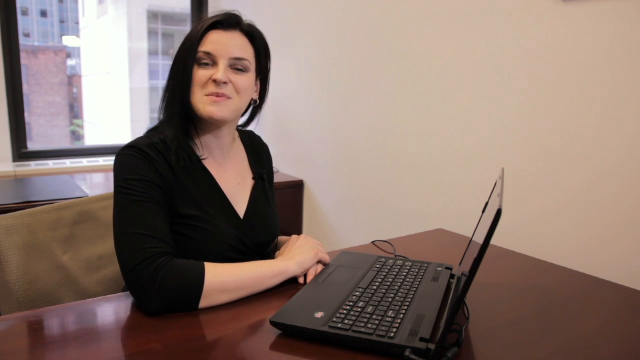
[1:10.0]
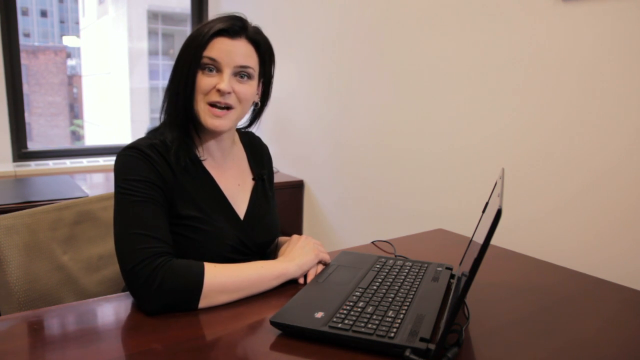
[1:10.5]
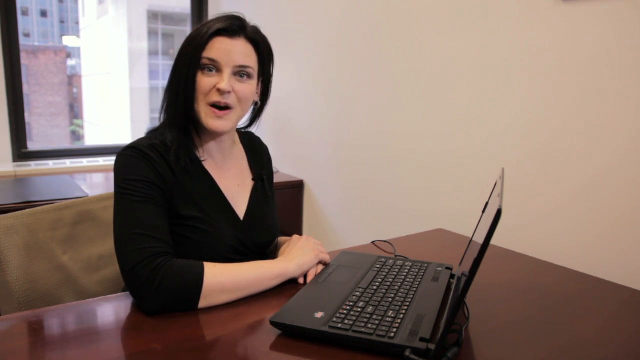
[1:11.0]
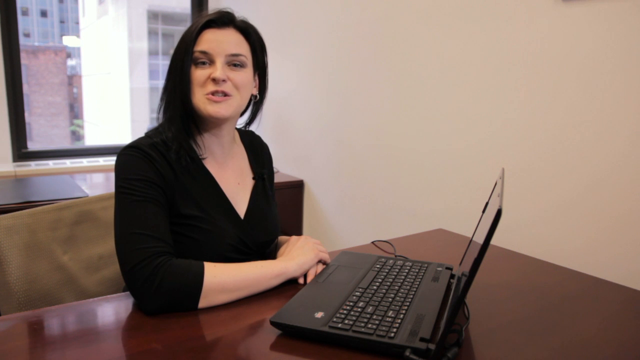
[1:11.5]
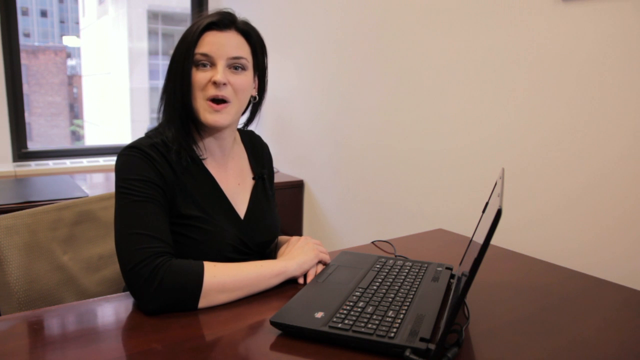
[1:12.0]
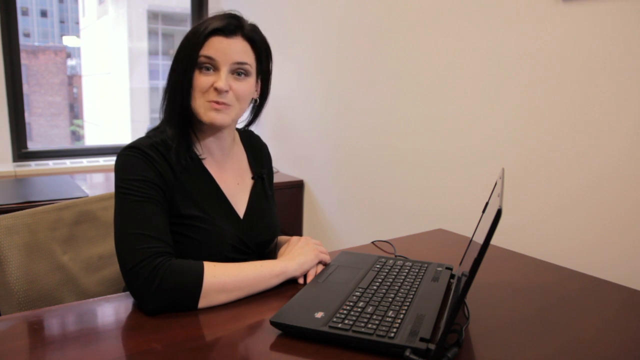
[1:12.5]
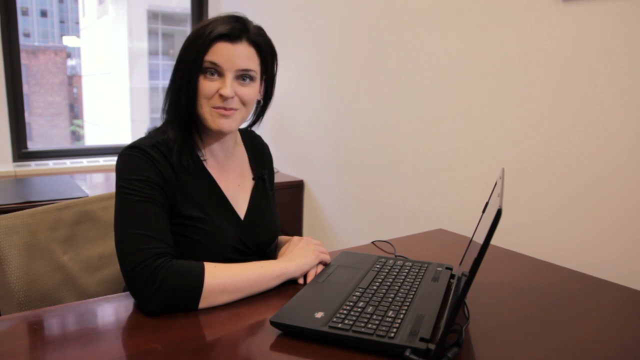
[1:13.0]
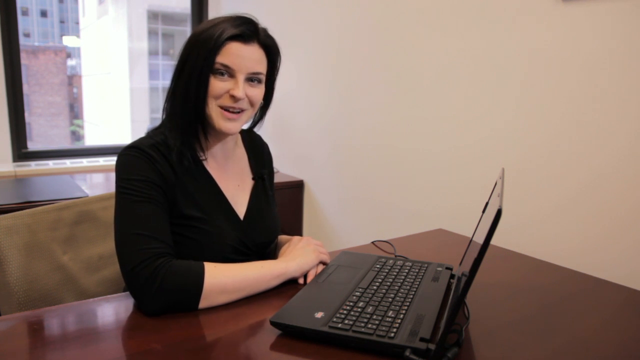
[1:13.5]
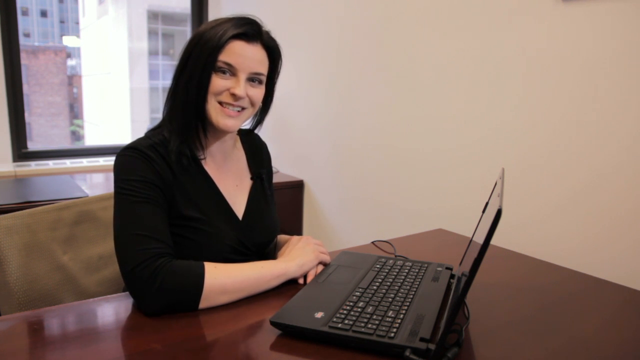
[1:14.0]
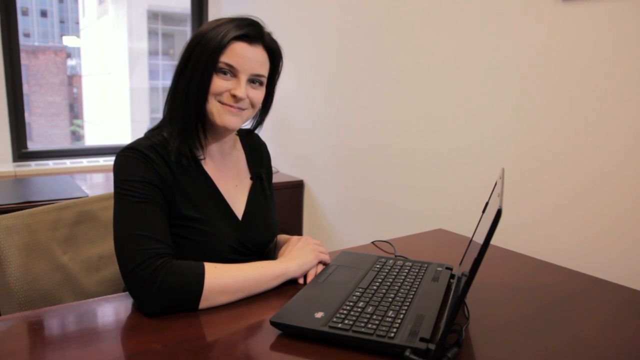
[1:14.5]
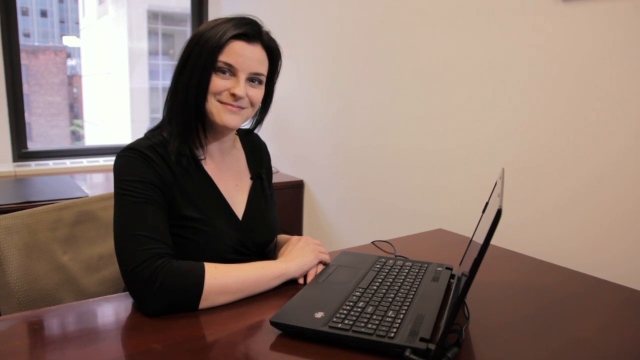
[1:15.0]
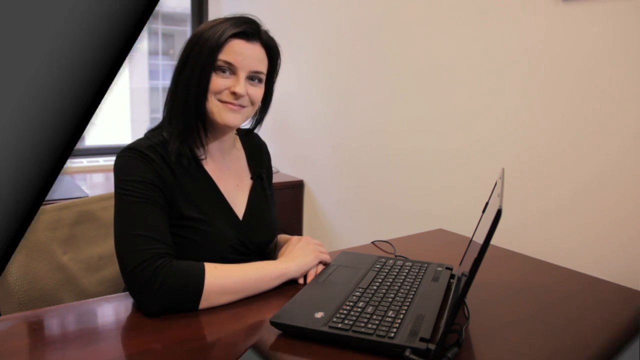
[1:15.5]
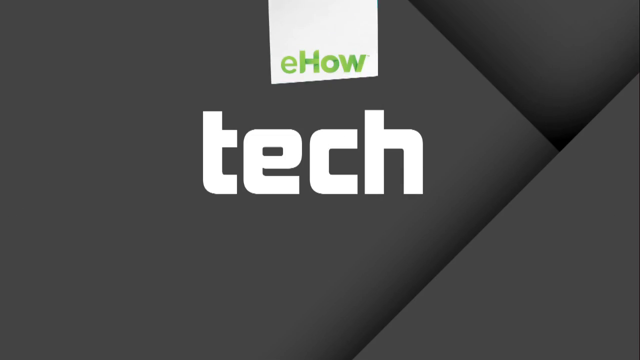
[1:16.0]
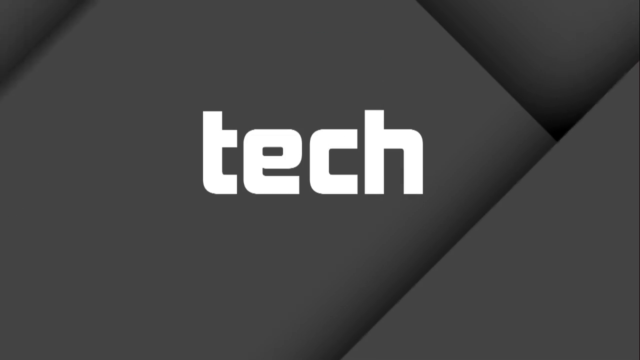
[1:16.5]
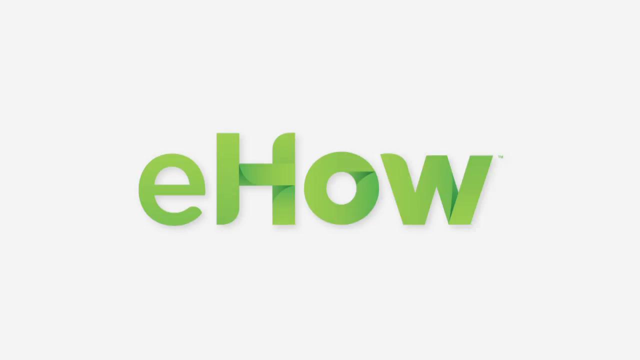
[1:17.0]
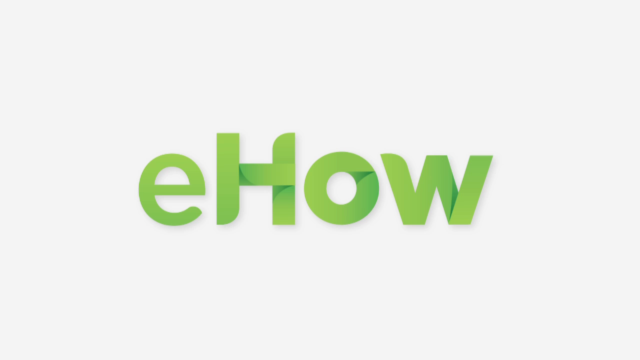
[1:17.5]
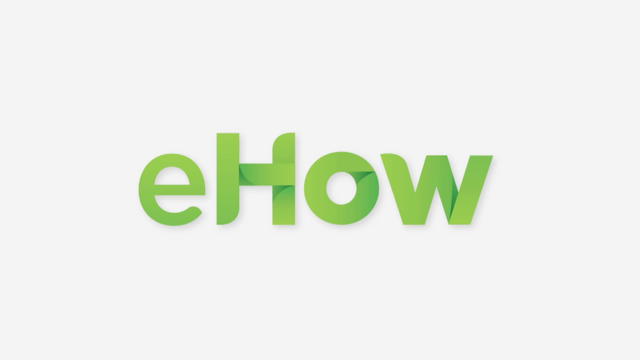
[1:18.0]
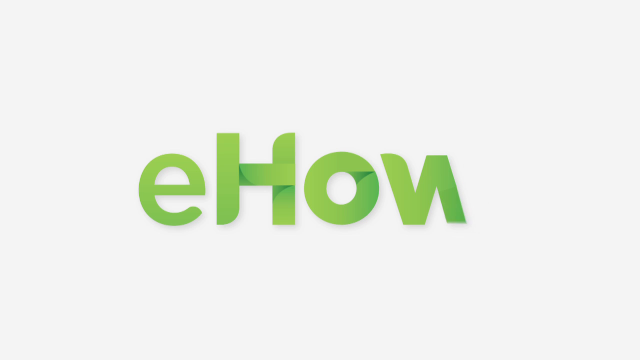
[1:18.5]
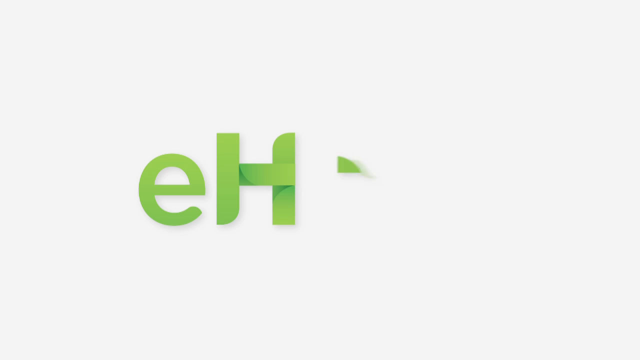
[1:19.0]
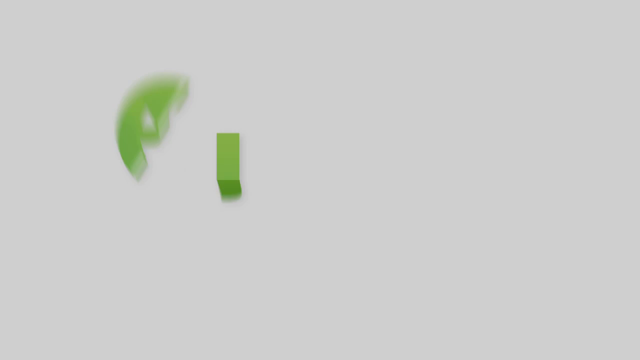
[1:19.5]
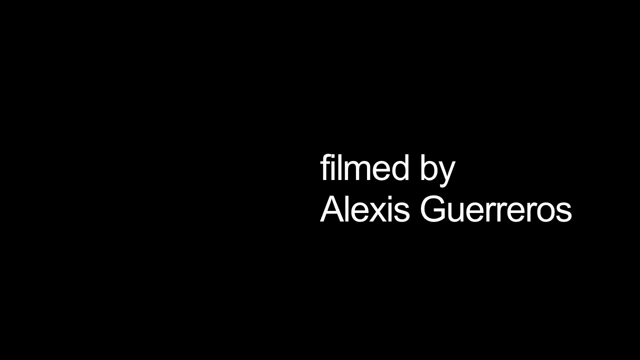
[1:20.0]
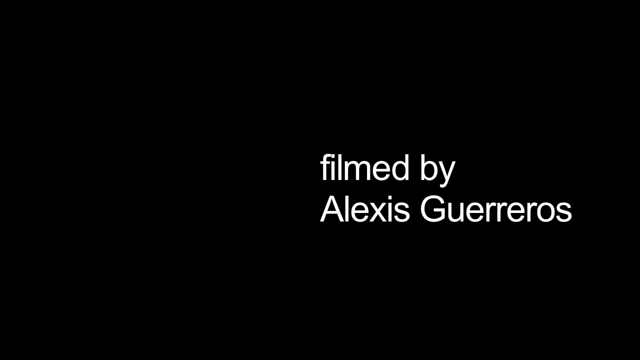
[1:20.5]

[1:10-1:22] A woman sits in an office with a window behind her. She has black hair and a black top and sits in front of a laptop on a desk. She talks to the camera, kind of moving her head around, and smiles at the camera. The video then goes to another screen with a gray background in darker and lighter shades that kind of moves around. A banner at the top reads "Ehow" in green text on a white background, and "Tech" appears in white text at the center. The gray background then disappears, giving way to a white background with "Ehow" in large green letters, which slowly fade off the screen. Finally, "Filmed by Alexis Guerrero" appears on a black screen.